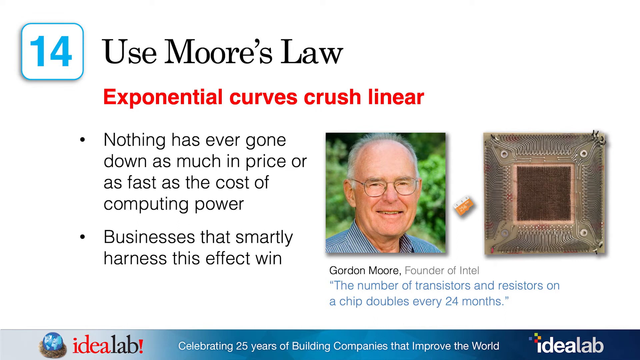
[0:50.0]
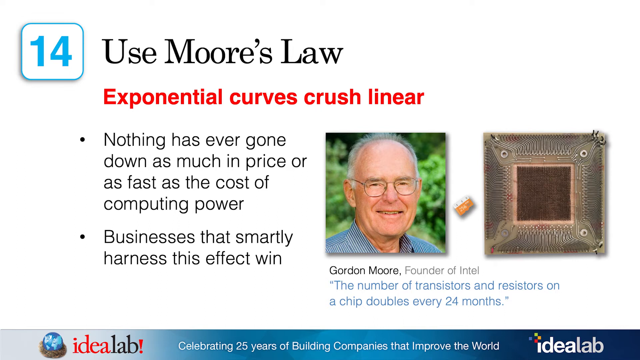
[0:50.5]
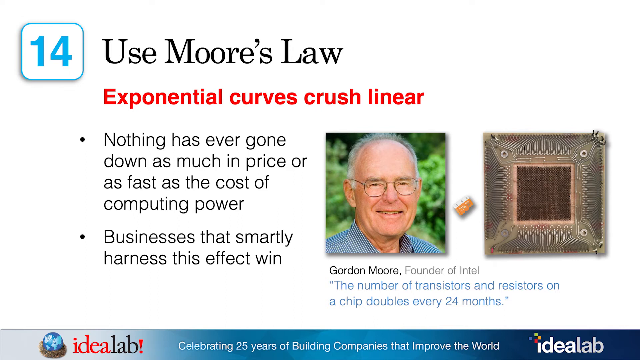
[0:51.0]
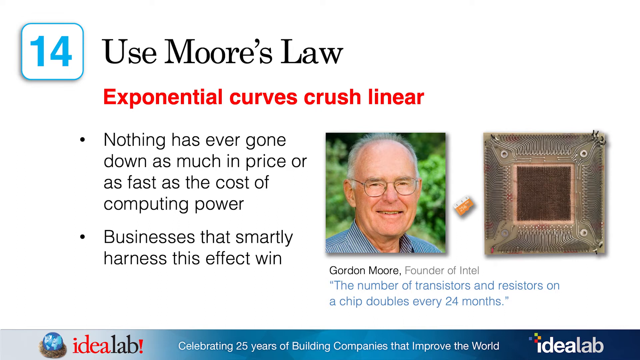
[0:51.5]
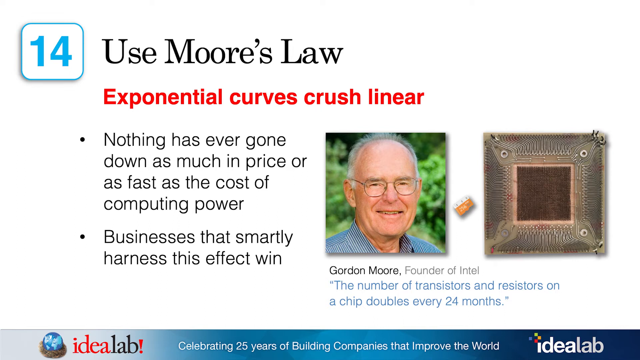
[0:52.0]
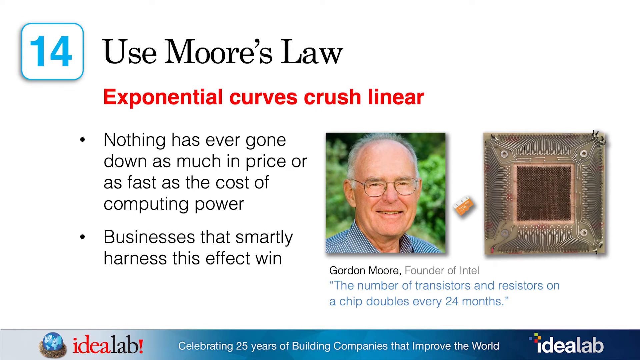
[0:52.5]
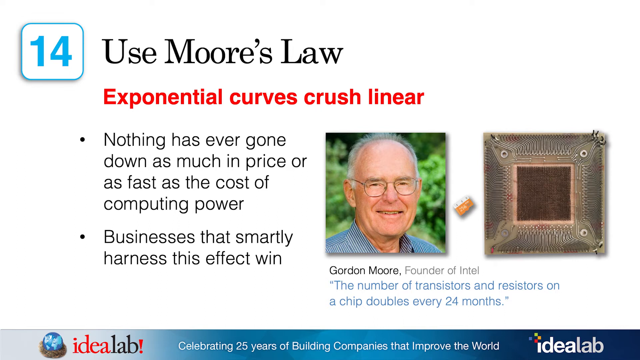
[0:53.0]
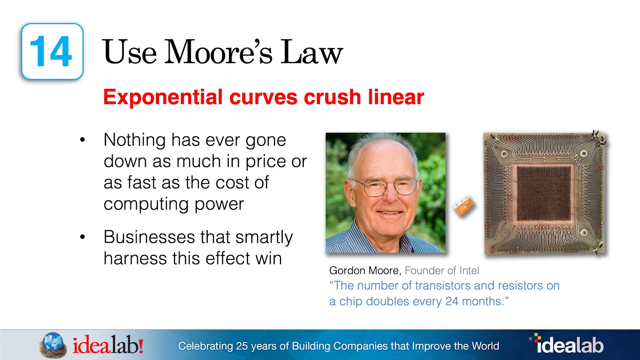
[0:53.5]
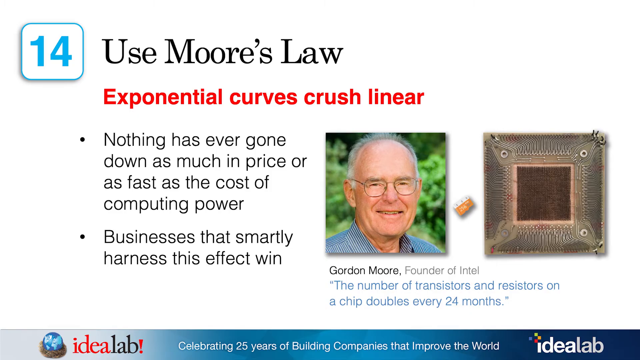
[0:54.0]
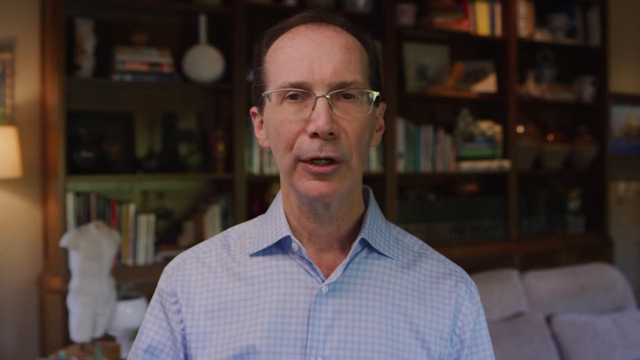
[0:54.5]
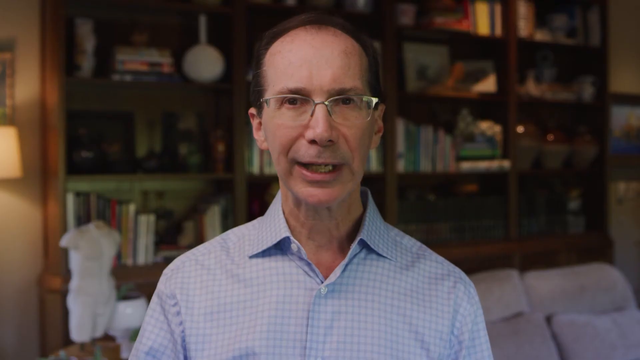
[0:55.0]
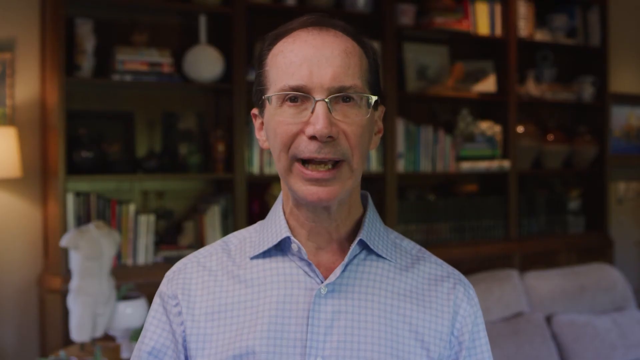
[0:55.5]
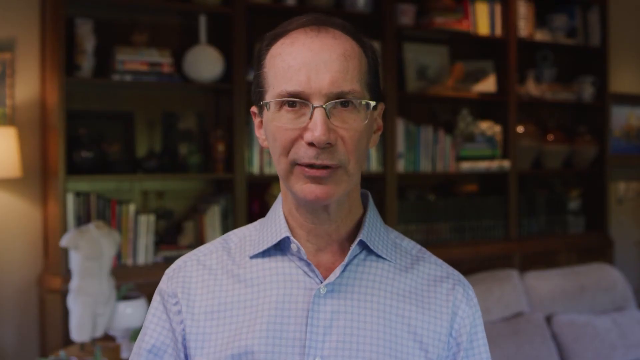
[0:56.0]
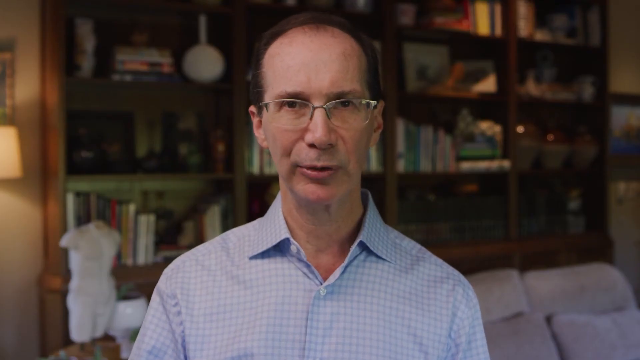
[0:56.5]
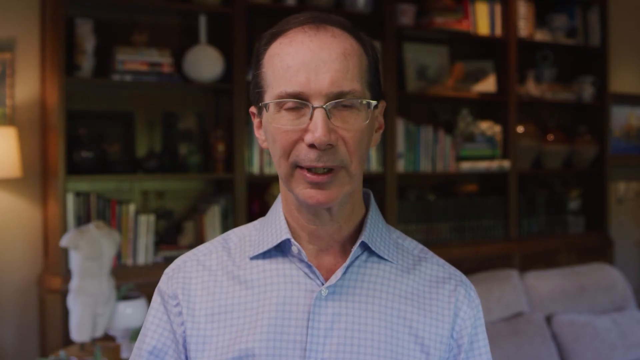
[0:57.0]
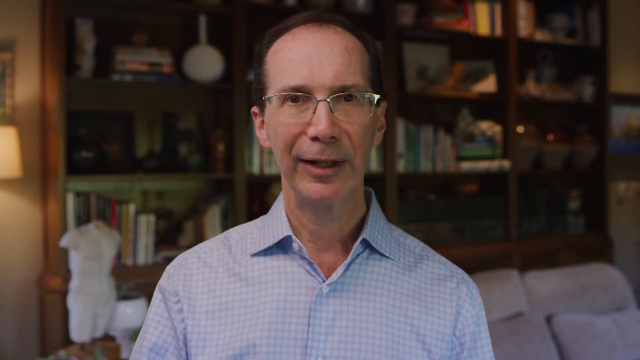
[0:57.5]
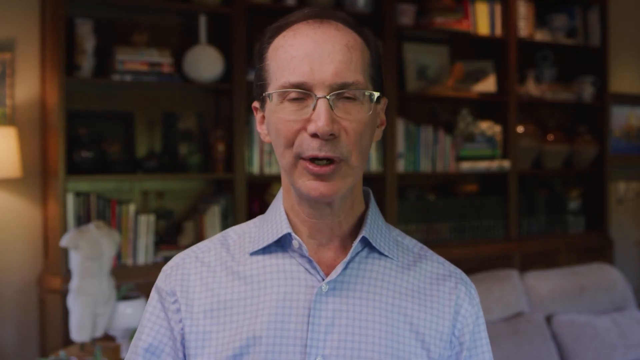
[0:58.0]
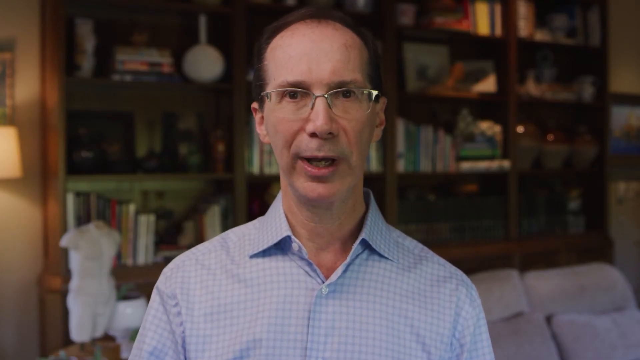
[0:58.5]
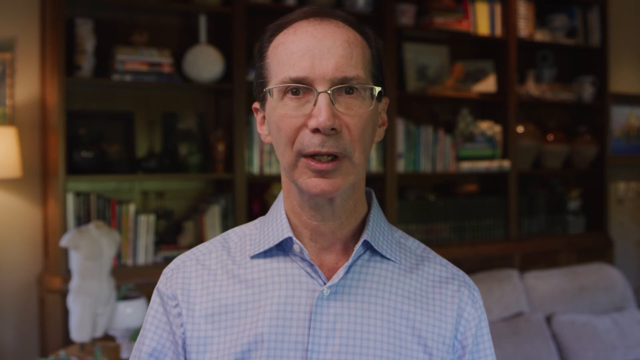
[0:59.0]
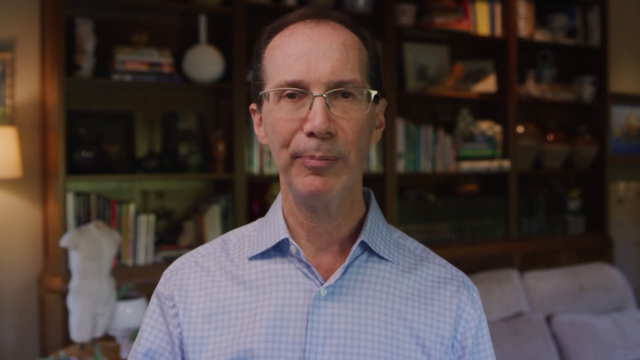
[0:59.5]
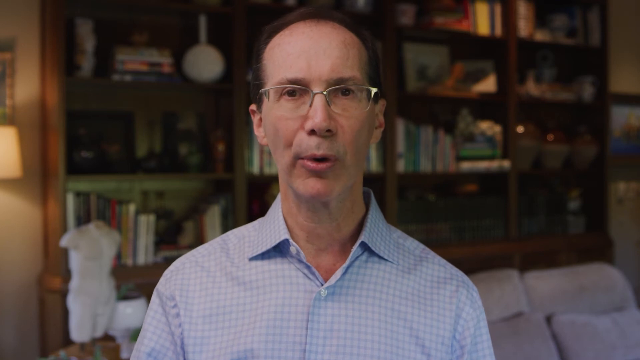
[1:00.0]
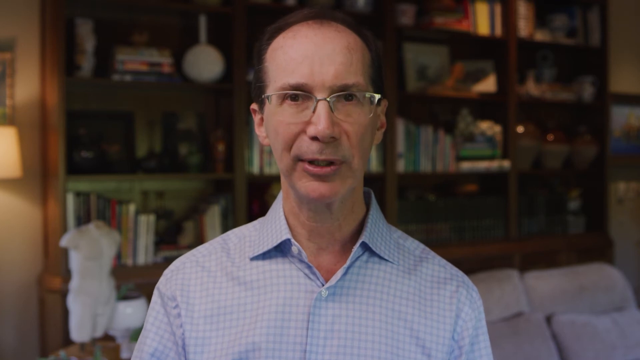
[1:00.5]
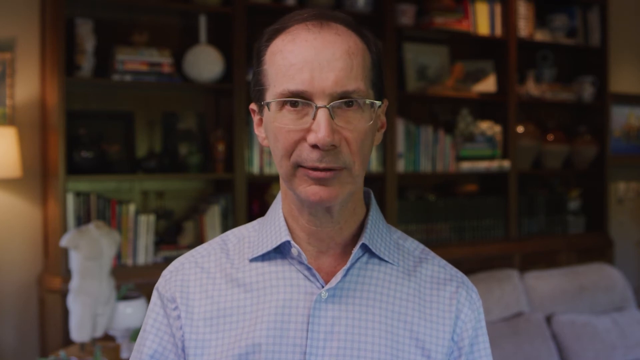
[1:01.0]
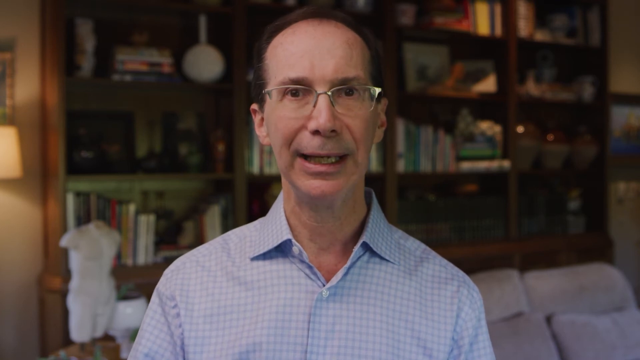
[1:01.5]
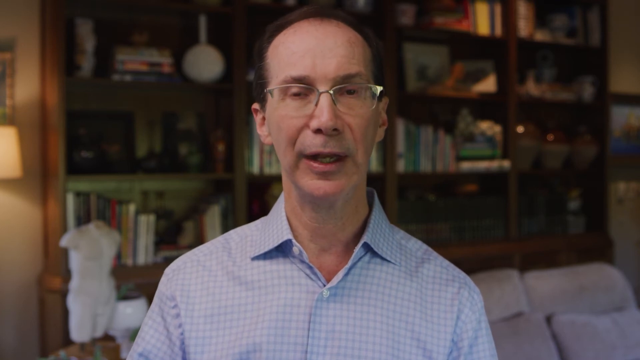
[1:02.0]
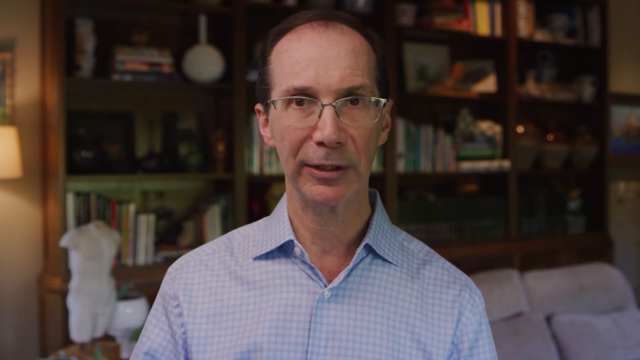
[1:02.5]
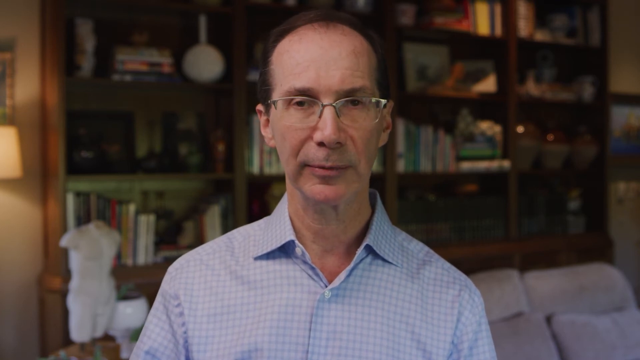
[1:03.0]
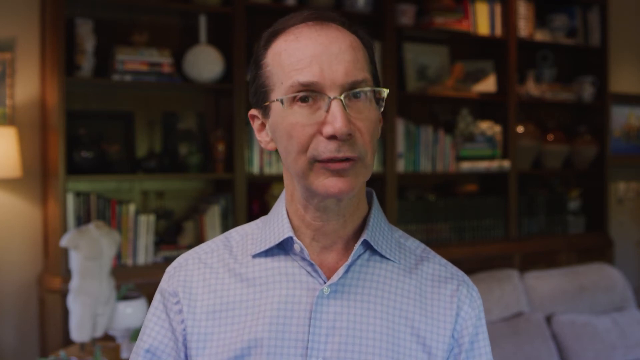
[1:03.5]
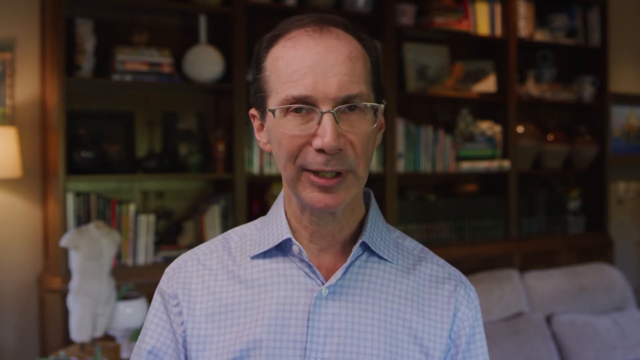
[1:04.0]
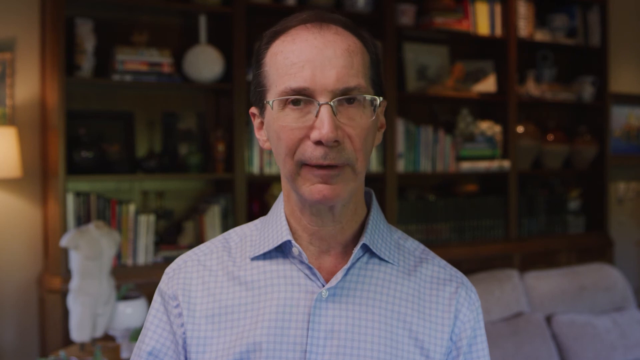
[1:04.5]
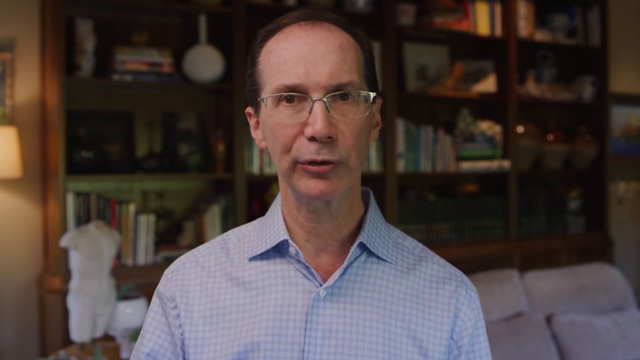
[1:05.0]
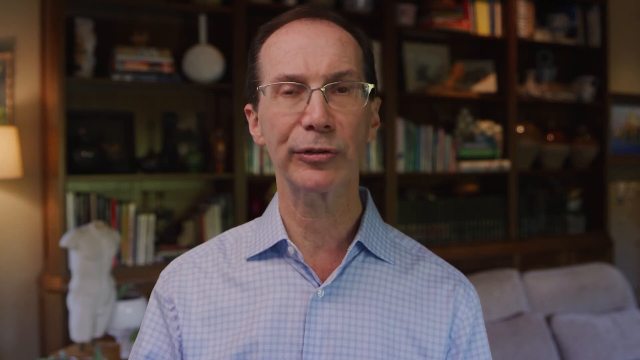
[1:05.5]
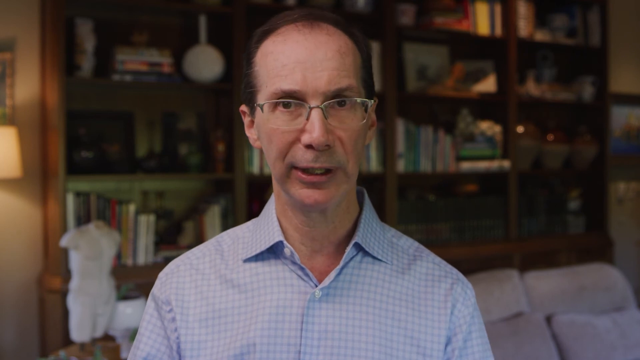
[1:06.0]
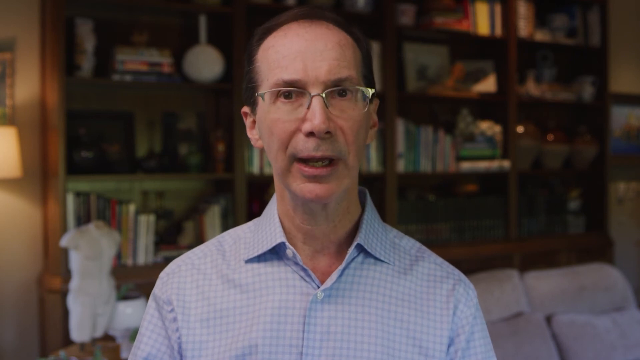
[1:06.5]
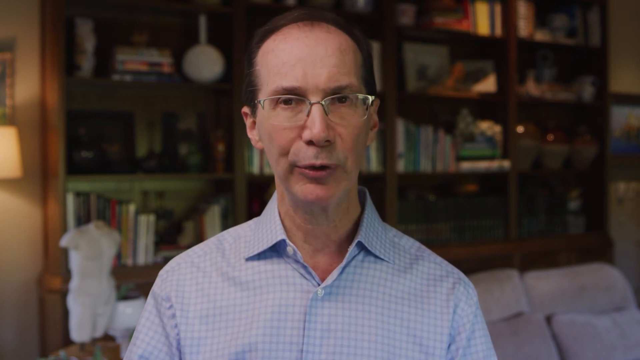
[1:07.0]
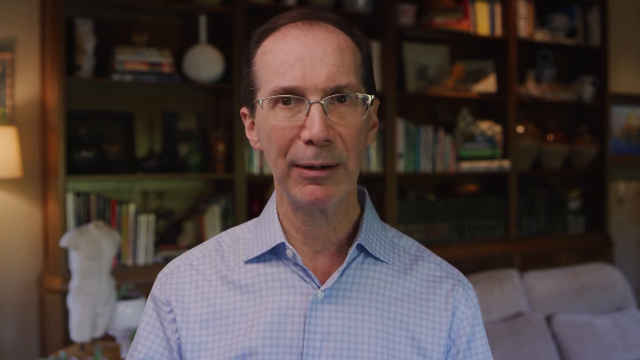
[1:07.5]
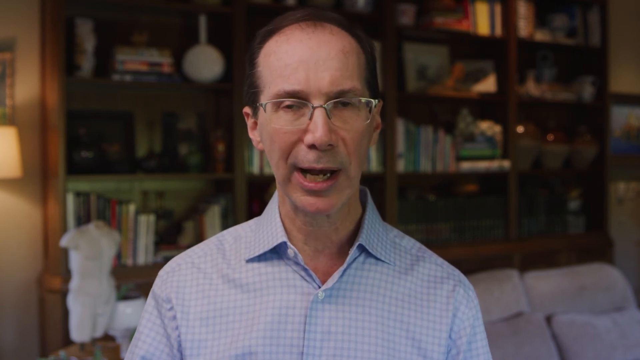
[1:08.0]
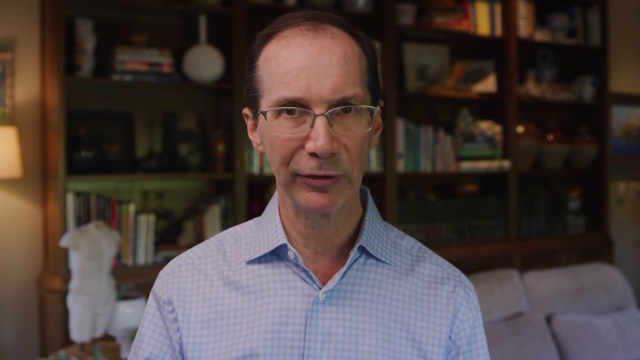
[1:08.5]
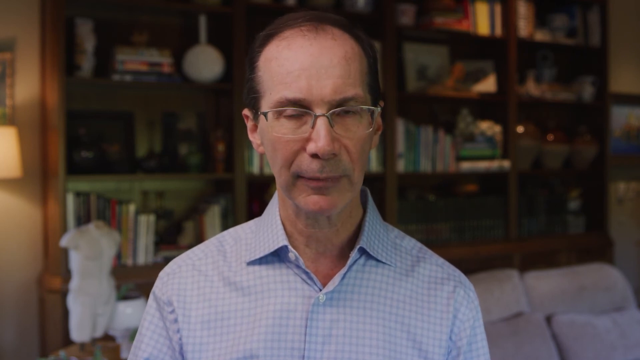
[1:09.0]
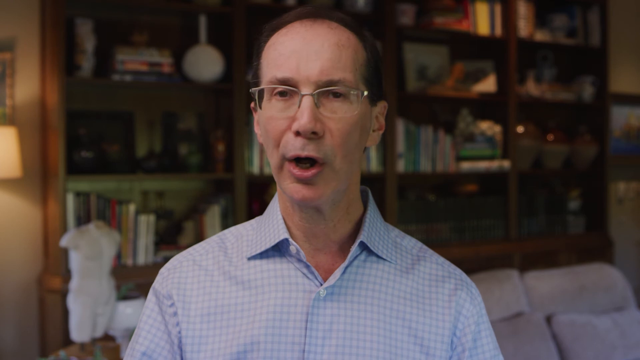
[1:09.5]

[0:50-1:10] The man speaks directly into the camera the entire time. He appears to be 55 to 60 years old, wears eyeglasses and a blue and white dress shirt, and has brown hair. The background is a bit blurred, but various shelves with items on them are visible, including books and what appear to be figurines. To the left is a partial image of lighting, possibly a table lamp or some other kind of lighting.